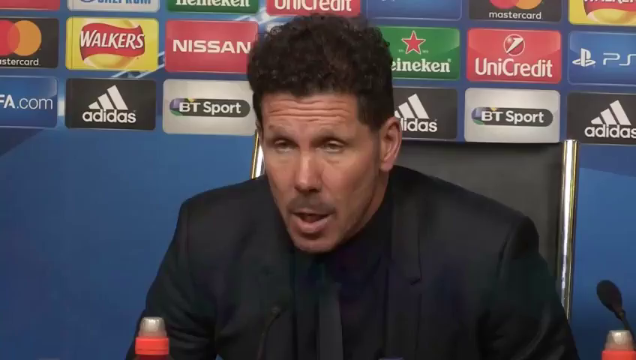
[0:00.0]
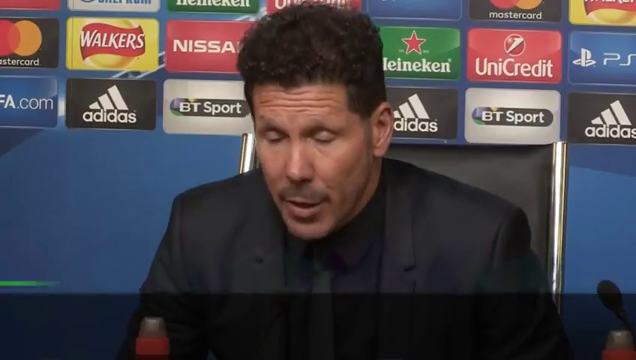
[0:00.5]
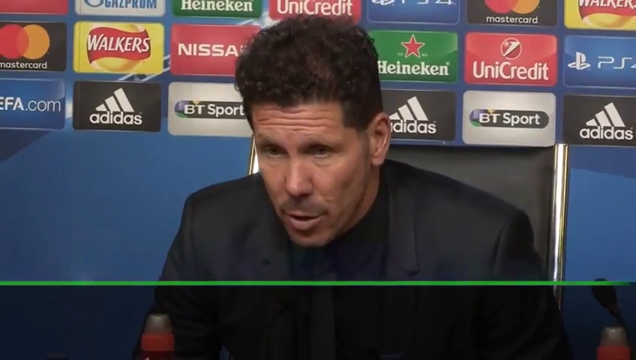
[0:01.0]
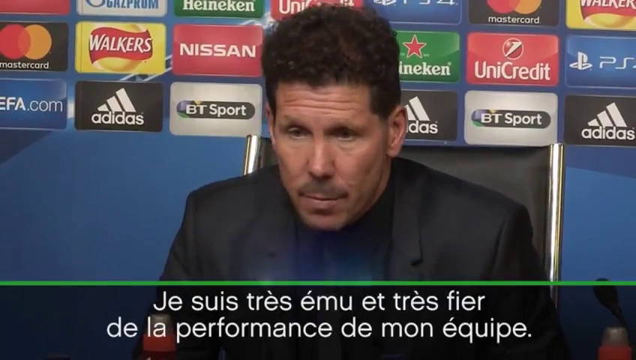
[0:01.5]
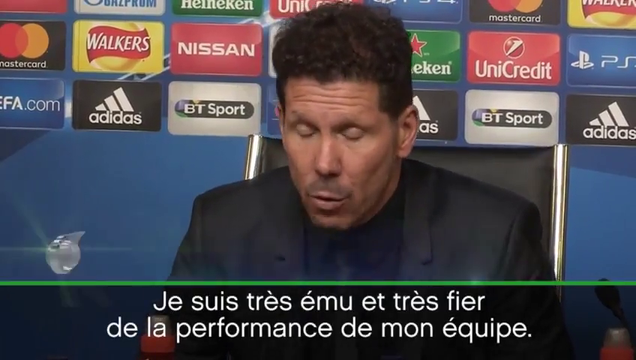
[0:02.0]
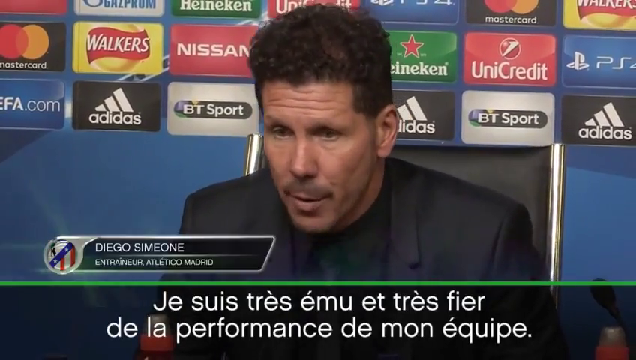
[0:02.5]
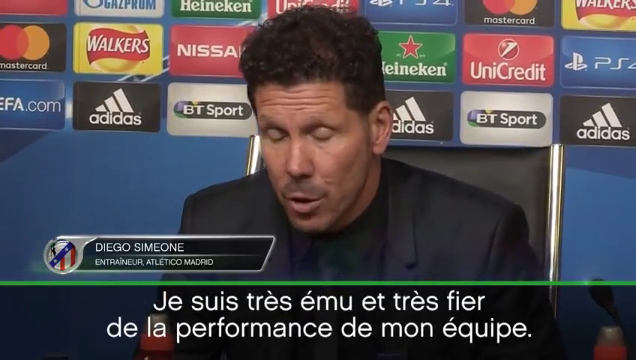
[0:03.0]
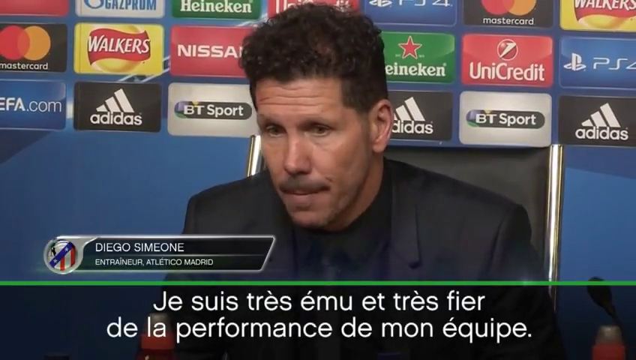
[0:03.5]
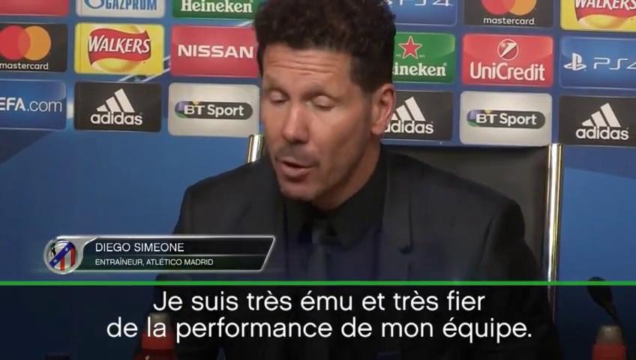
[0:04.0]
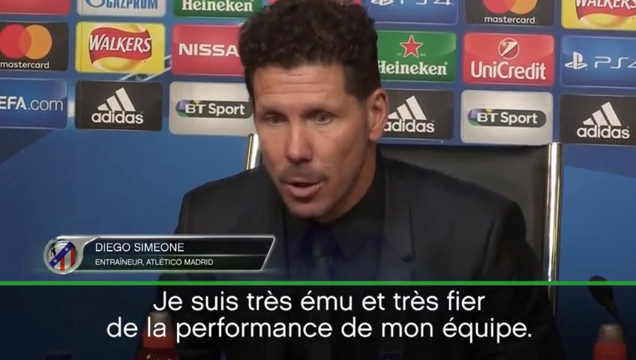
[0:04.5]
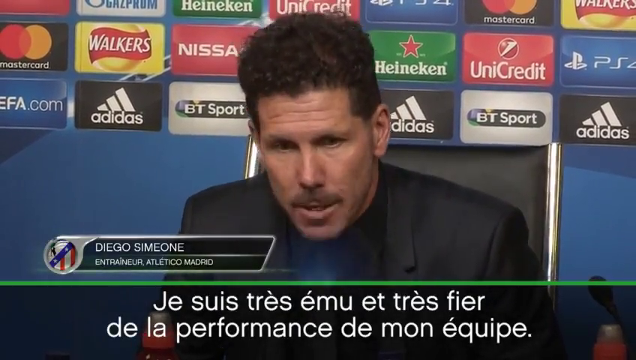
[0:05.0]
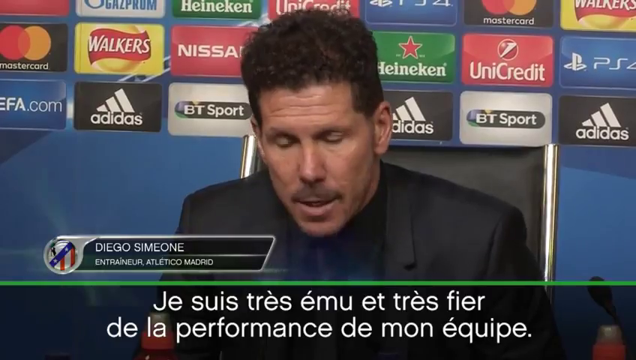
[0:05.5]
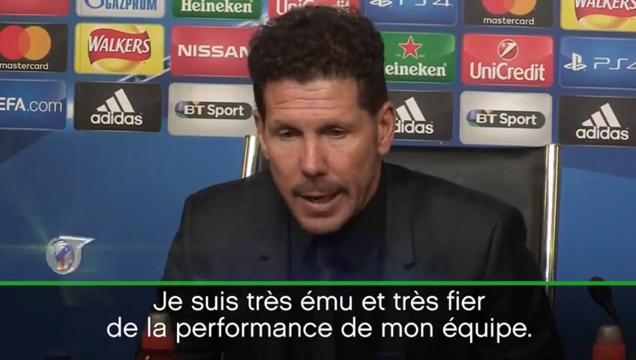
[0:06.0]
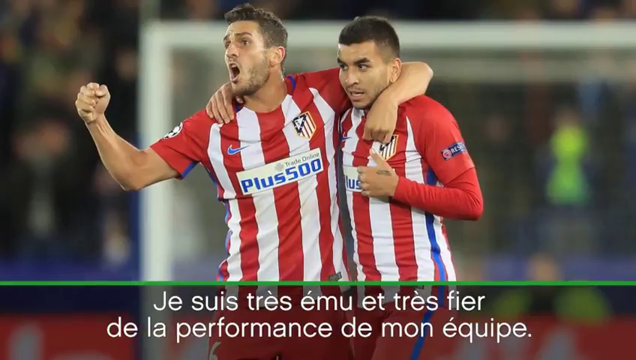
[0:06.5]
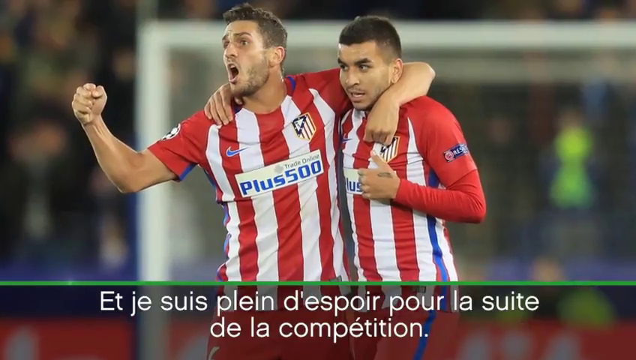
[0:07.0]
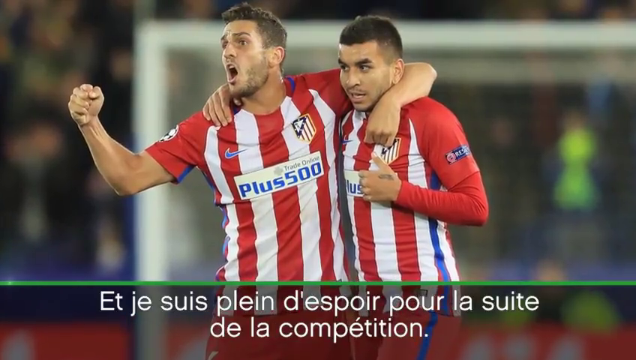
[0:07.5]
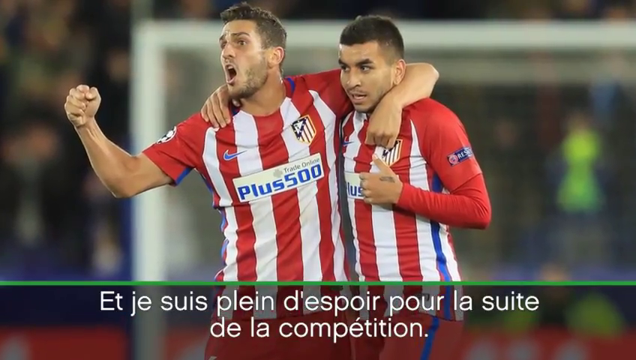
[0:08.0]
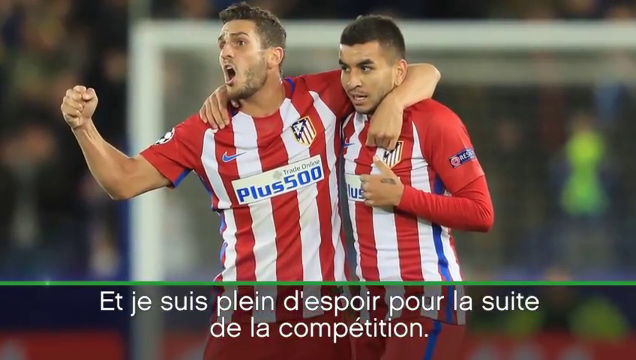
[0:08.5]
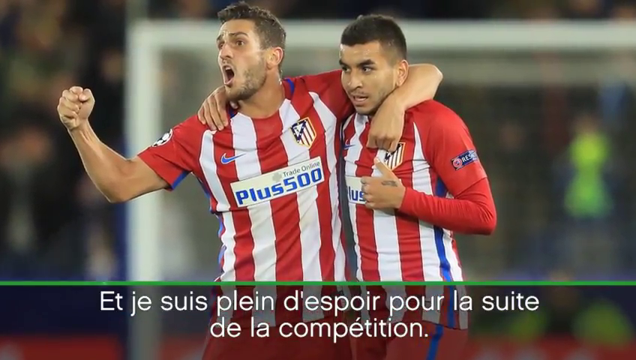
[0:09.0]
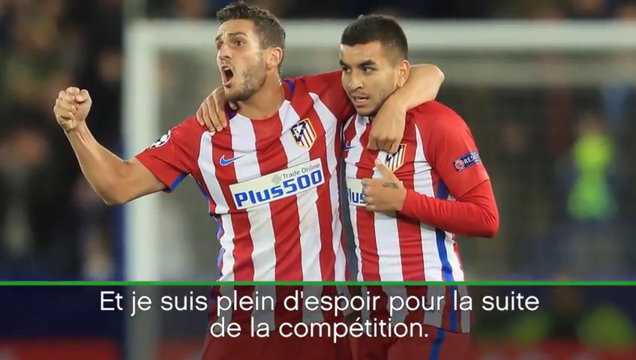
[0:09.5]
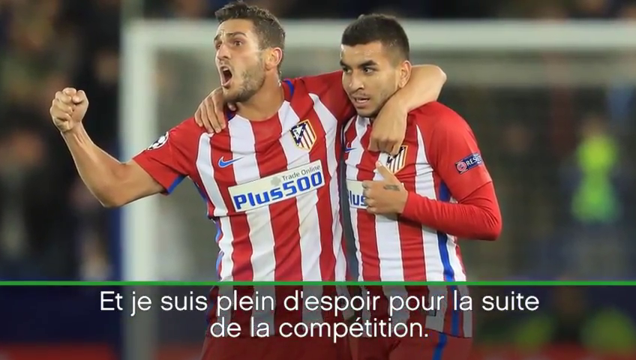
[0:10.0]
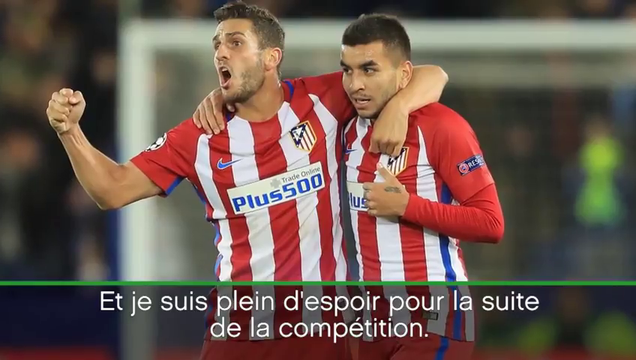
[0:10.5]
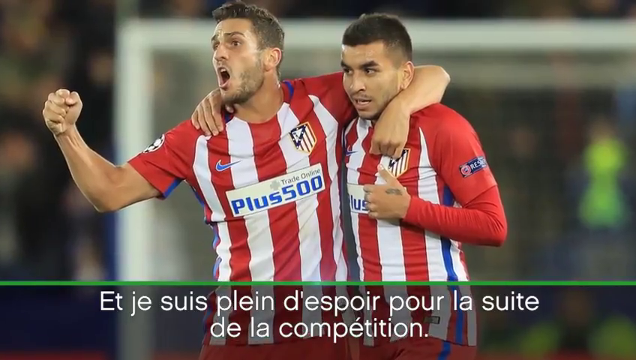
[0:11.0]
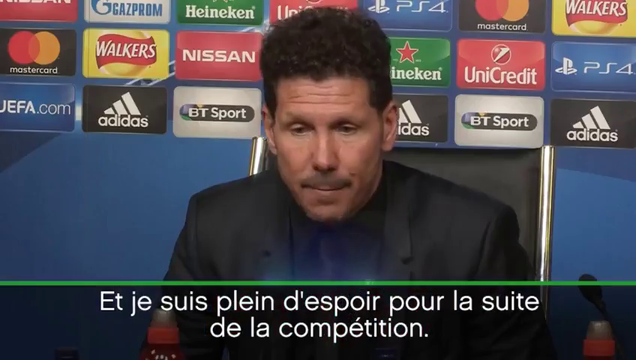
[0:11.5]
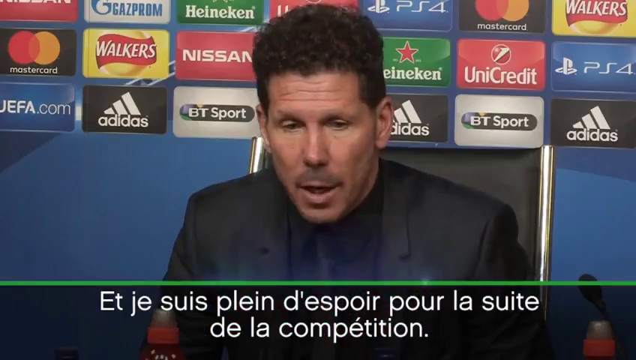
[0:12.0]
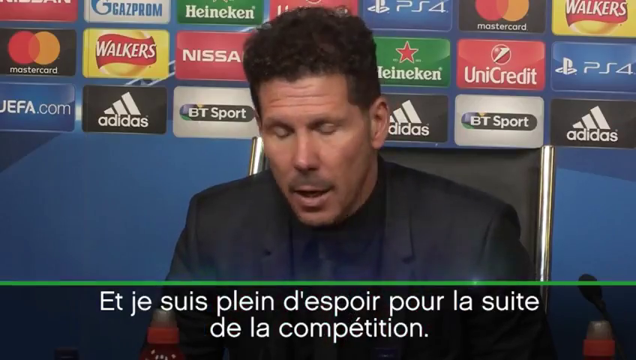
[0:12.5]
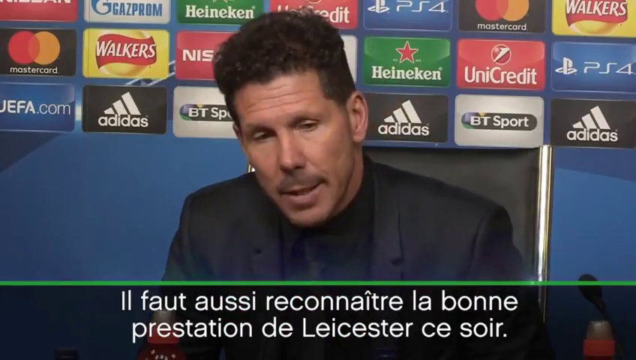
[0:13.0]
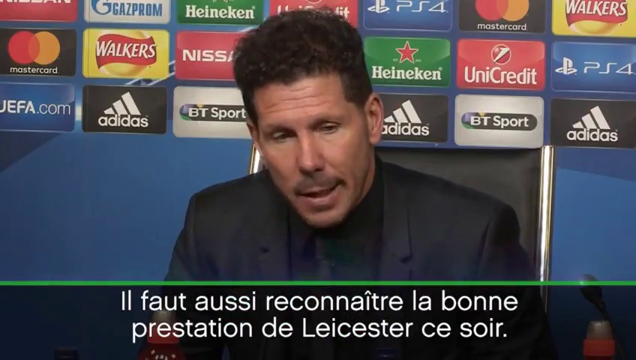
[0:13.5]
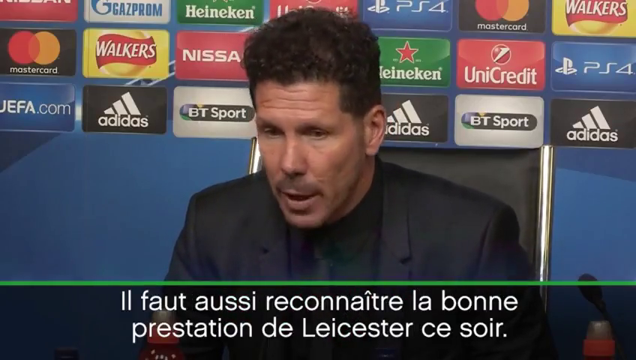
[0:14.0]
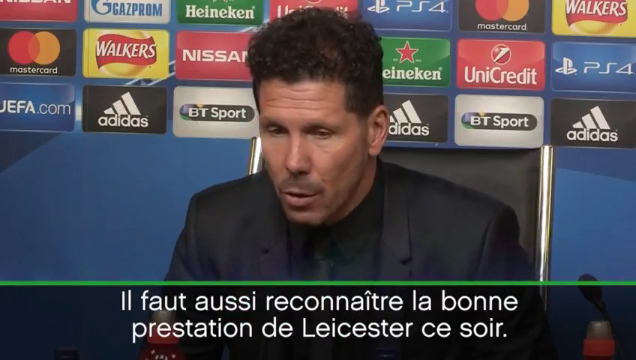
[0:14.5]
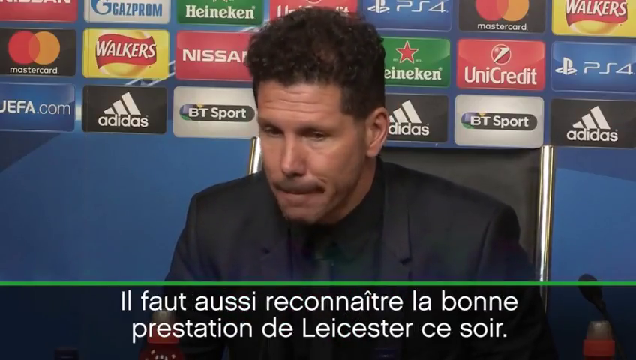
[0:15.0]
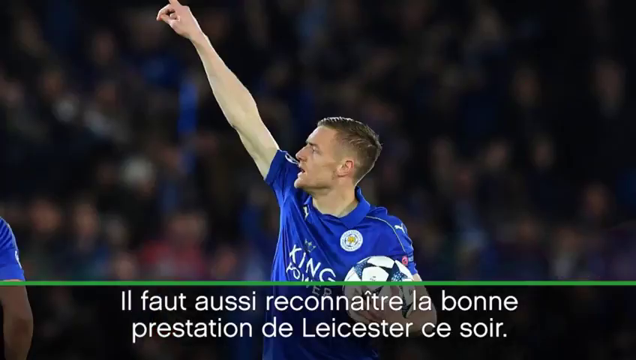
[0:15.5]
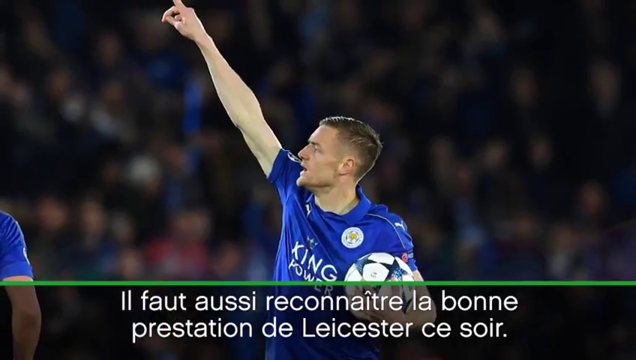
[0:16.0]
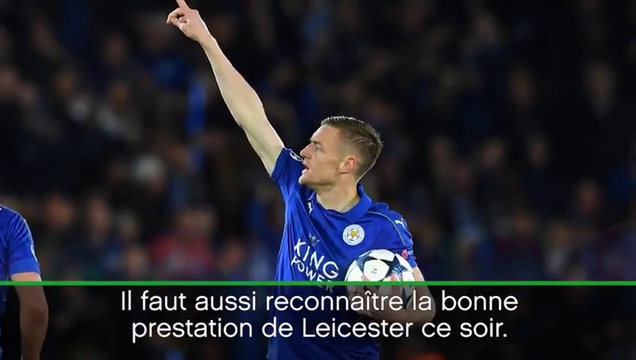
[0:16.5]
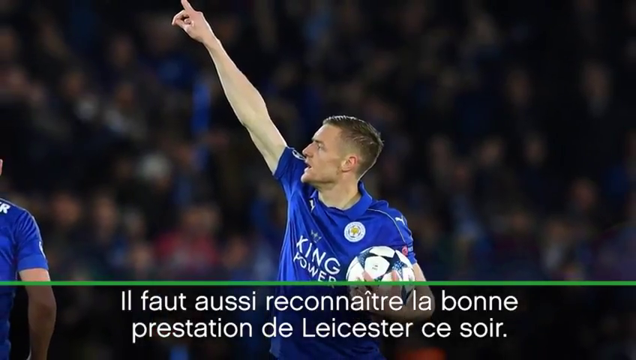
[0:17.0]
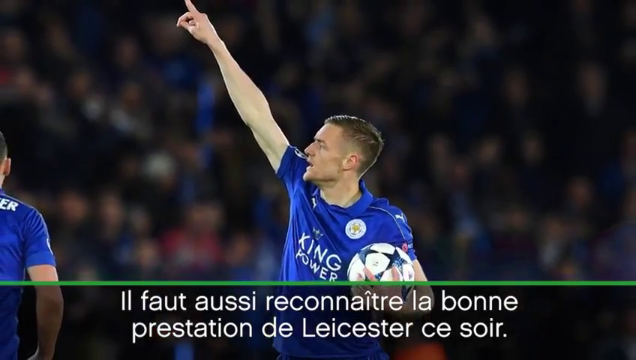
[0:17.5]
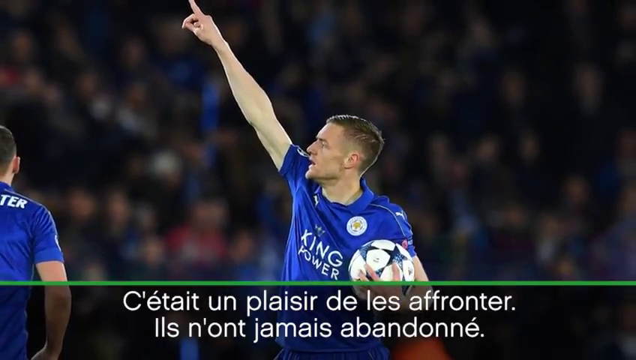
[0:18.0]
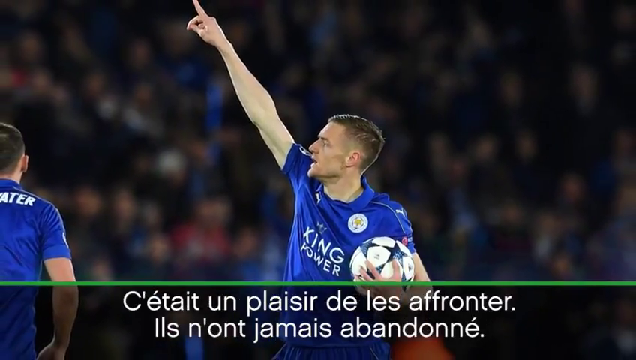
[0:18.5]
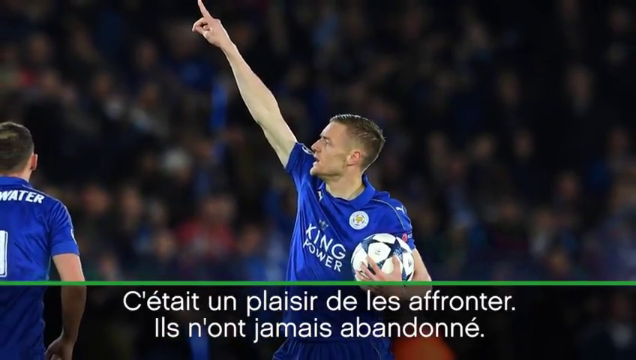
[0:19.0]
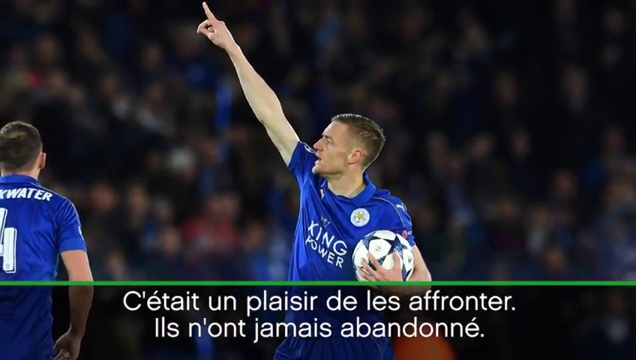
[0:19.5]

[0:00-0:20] A press conference opens with a man in the middle of the screen, sitting on a black chair with silver sides and wearing a black suit and a black shirt. A microphone is on the right-hand side of the screen. He is talking, and words come up at the bottom of the screen reading "Diego Simeone, Entreneur Athletico Madrid". Beneath that is writing in French: "Je suis très ému et très fier de la performance de mon équipe." He speaks quite animatedly toward the screen. The video then cuts to an image of two men in red and white soccer kits with their arms around each other; the one on the left holds one hand out in a fist pump. It cuts back to Diego Simeone in the studio, then to an image of Jamie Vardy, a Leicester City footballer, holding a football and pointing one finger up in the air.